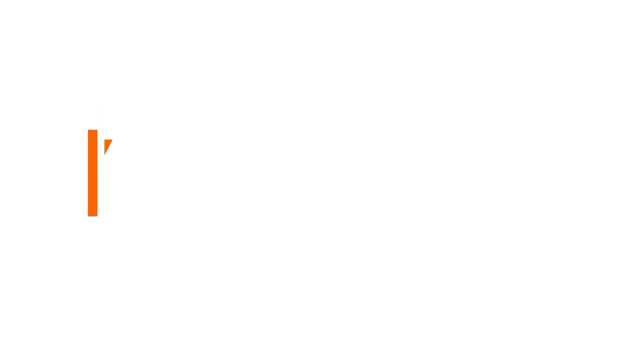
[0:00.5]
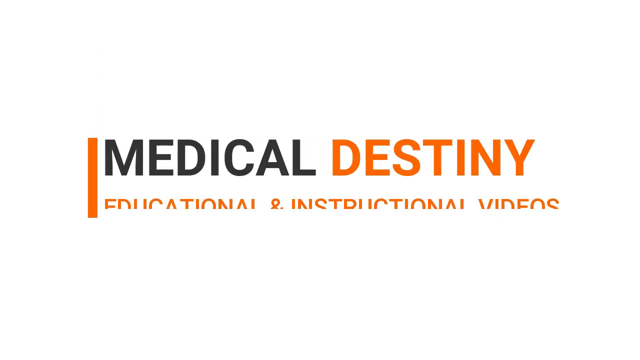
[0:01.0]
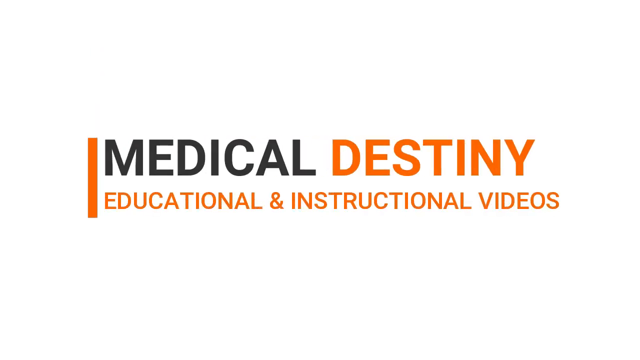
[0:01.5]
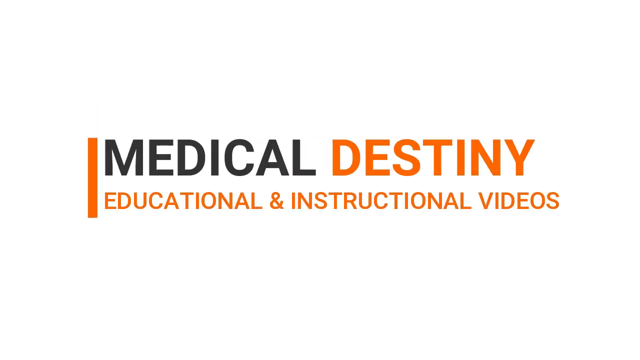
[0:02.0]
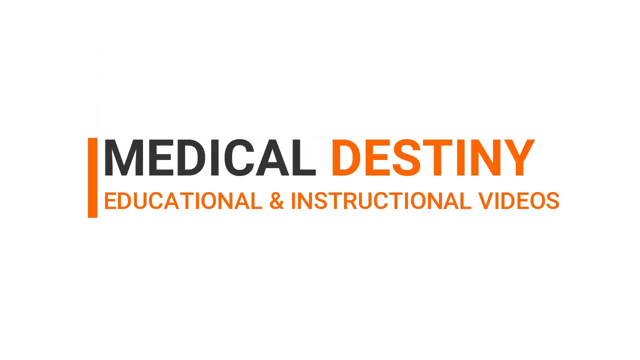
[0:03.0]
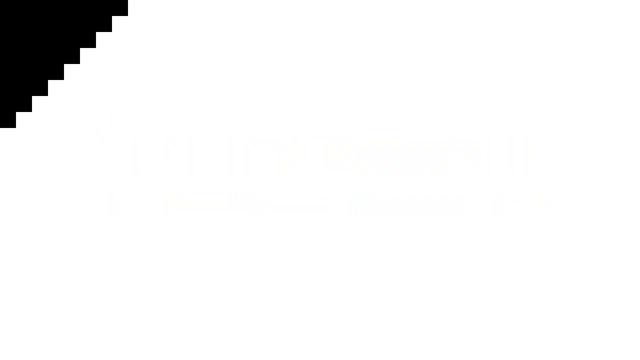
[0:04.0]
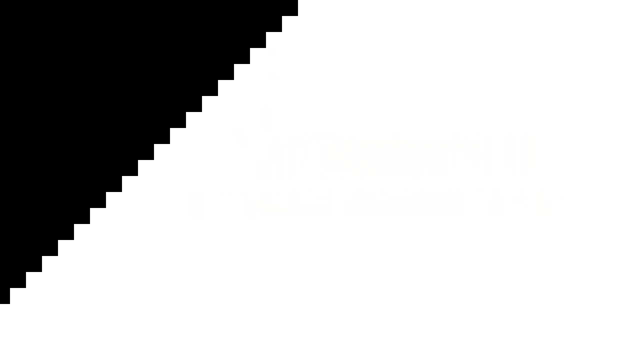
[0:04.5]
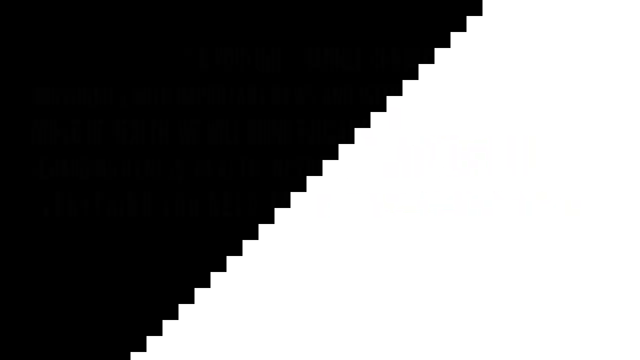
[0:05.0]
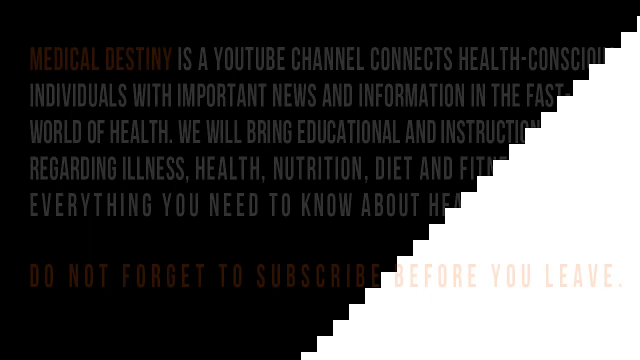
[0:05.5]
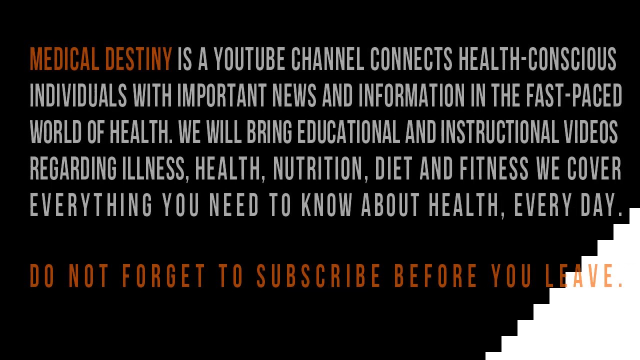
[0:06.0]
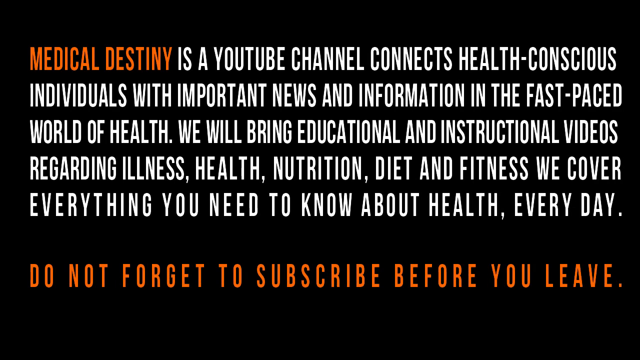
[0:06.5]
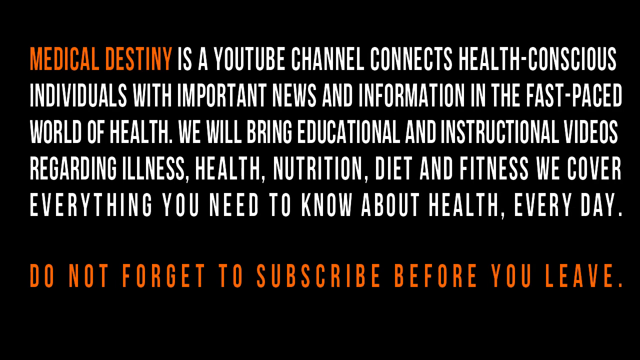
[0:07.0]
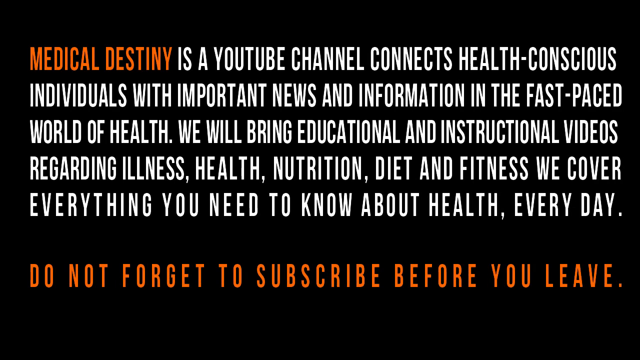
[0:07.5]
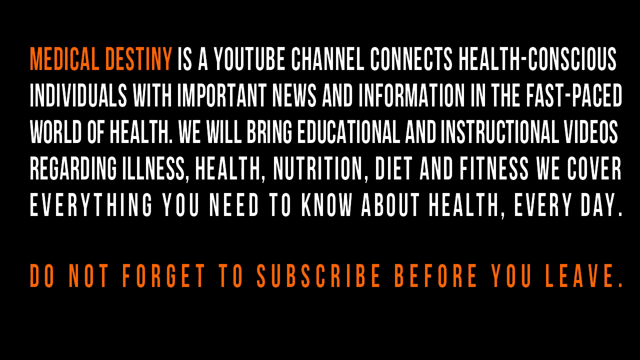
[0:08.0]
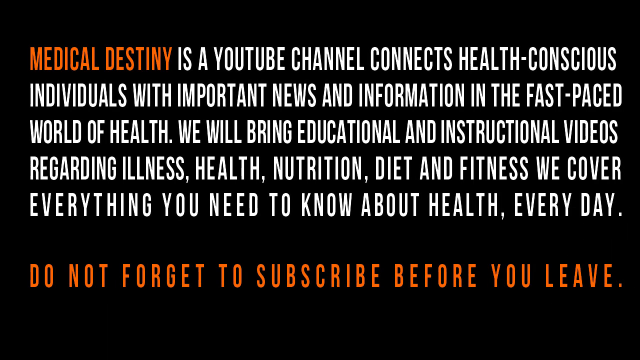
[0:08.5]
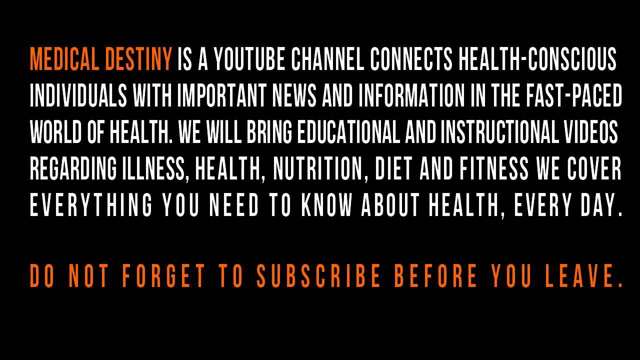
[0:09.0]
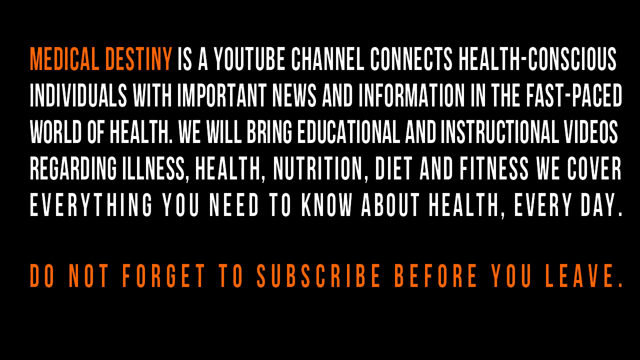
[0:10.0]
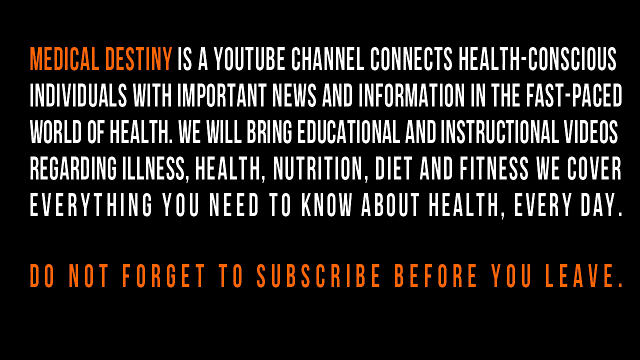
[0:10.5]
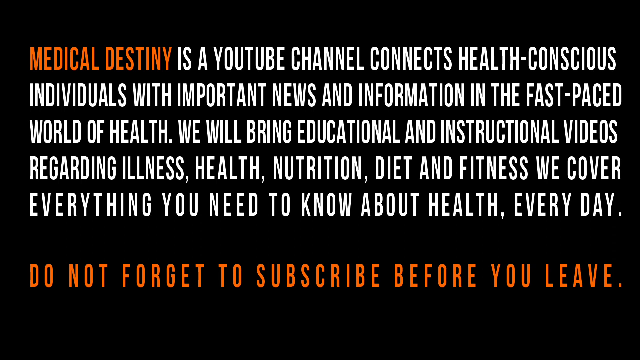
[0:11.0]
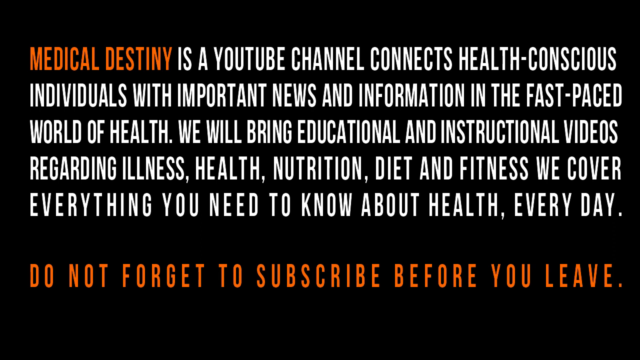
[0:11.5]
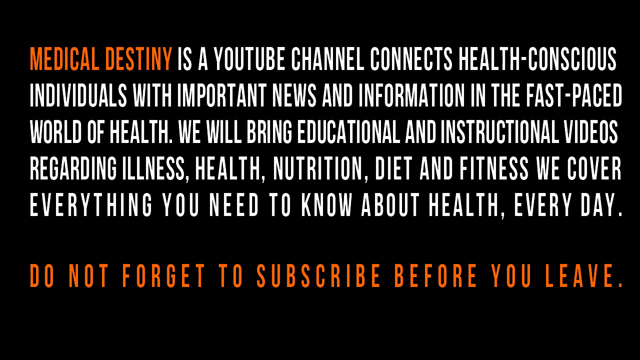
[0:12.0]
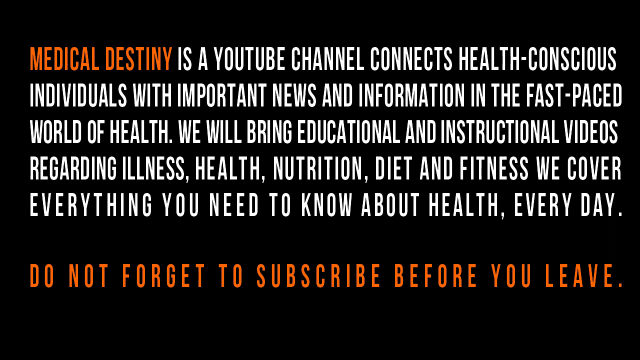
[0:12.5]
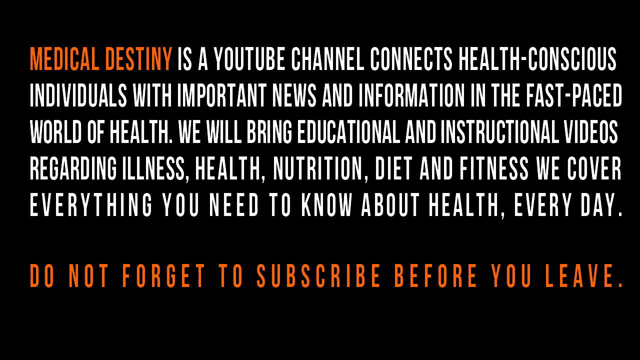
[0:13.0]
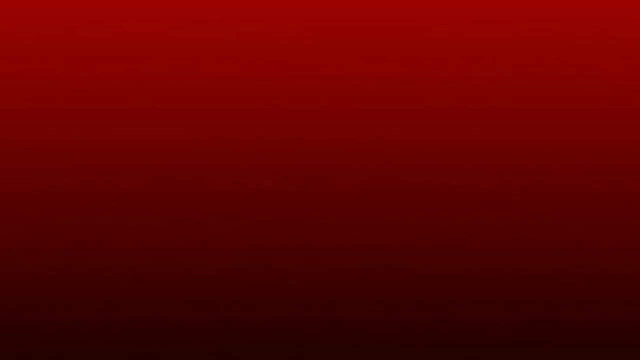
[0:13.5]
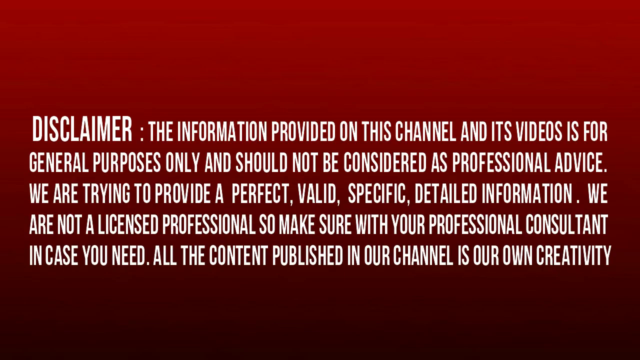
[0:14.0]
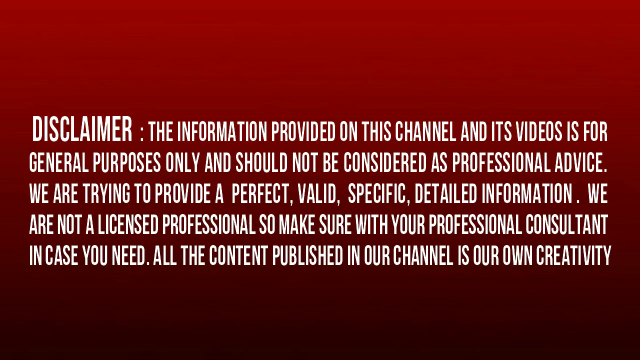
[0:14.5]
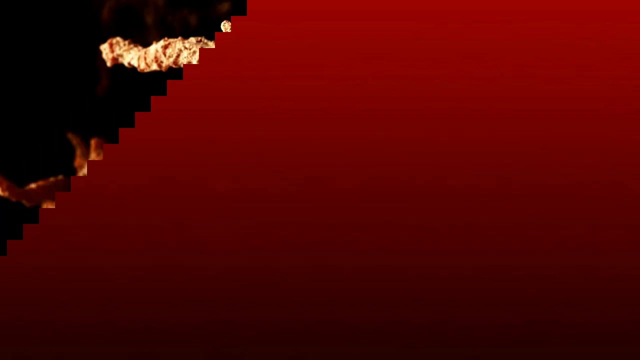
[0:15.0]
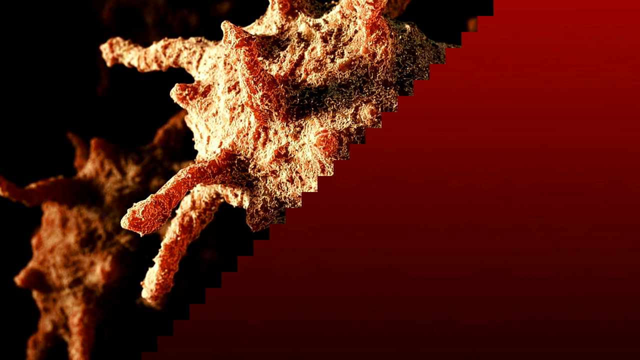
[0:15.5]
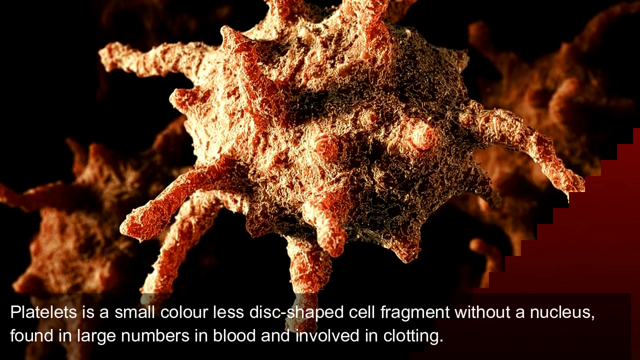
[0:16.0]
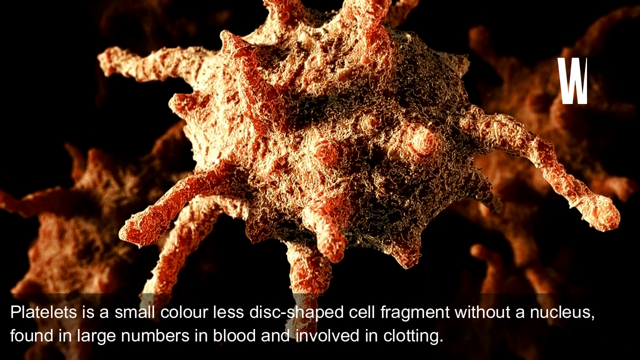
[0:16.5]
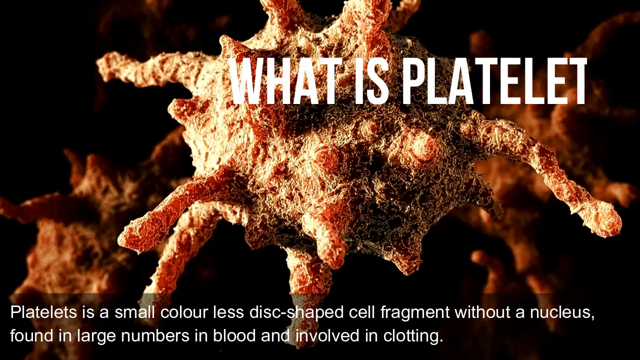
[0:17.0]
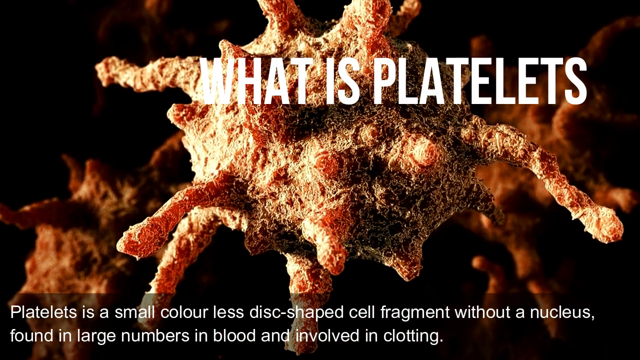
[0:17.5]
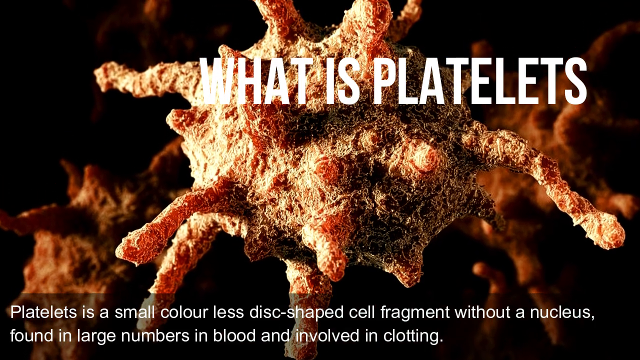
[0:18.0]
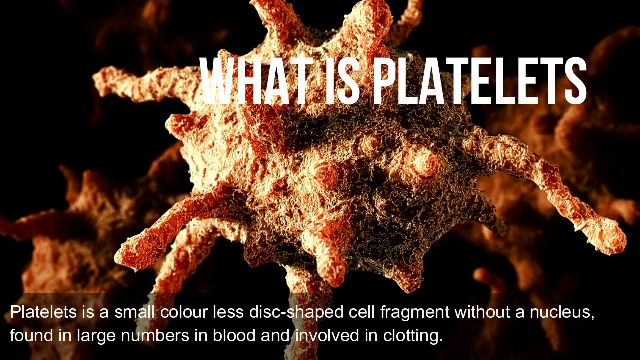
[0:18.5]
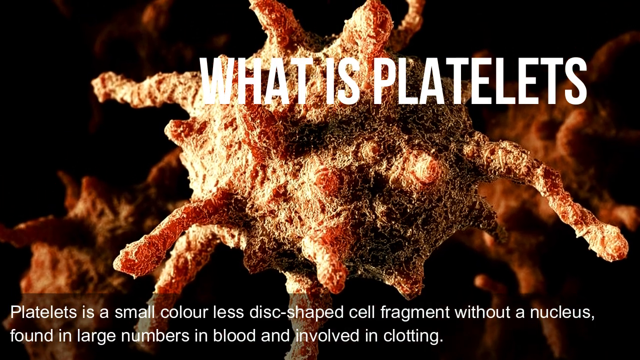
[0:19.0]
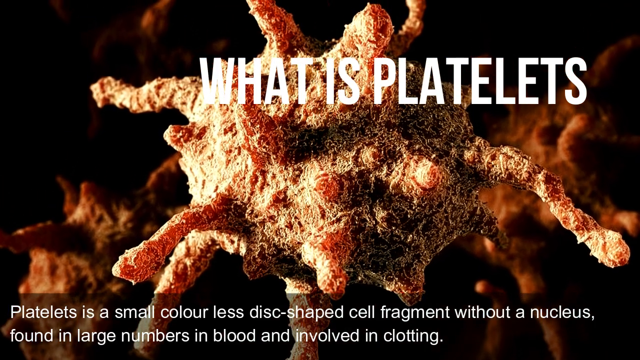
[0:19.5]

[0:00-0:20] The words "medical destiny" and "educational and instructional videos" appear on the screen against a white background. The words are orange, except for the word "medical", which is gray. A black transition effect turns the background from white to black, and text in white and orange reads: "medical destiny as a YouTube channel connects health conscious individuals with important news and information in the fast-paced world of health. We will bring educational and instructional videos regarding illness, health, nutrition, diet, and fitness. We cover everything you need to know about health every day. Do not forget to subscribe before you leave." Next, a red background appears with the word "DISCLAIMER" and text beginning "The information provided on this channel and its videos is for general purposes only".